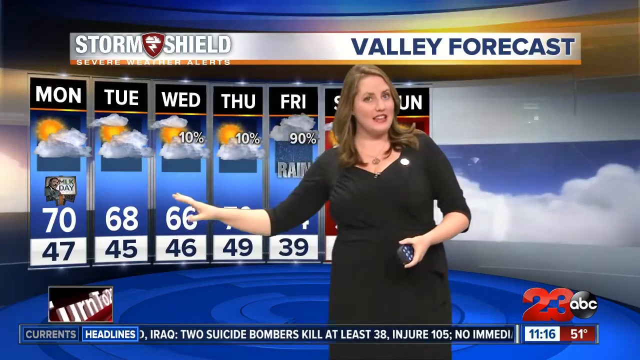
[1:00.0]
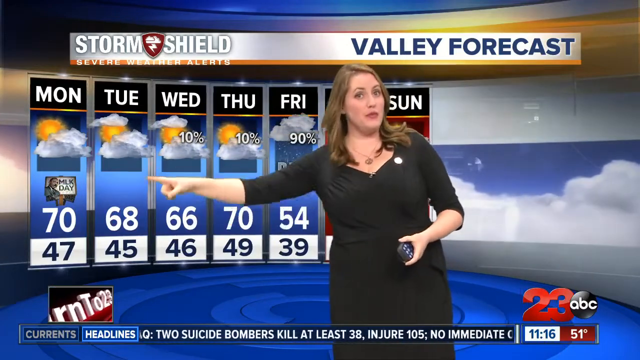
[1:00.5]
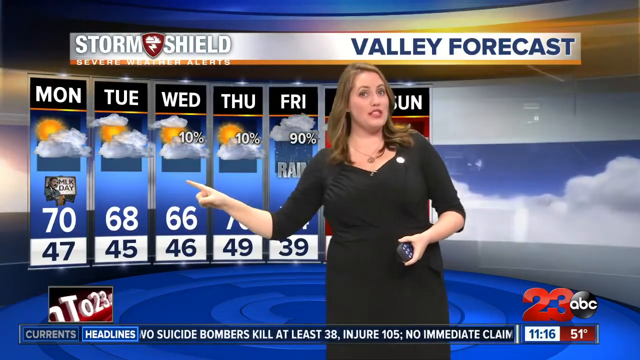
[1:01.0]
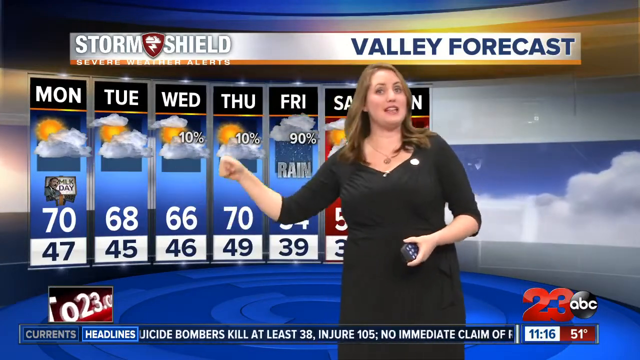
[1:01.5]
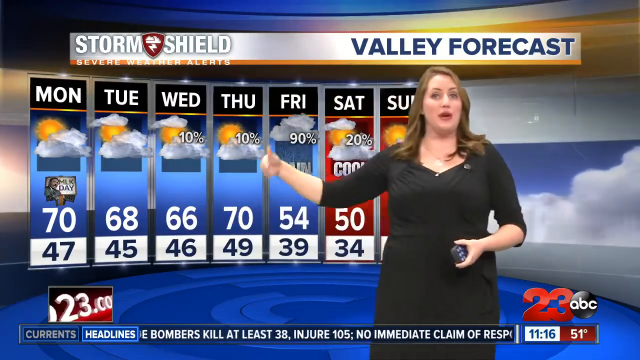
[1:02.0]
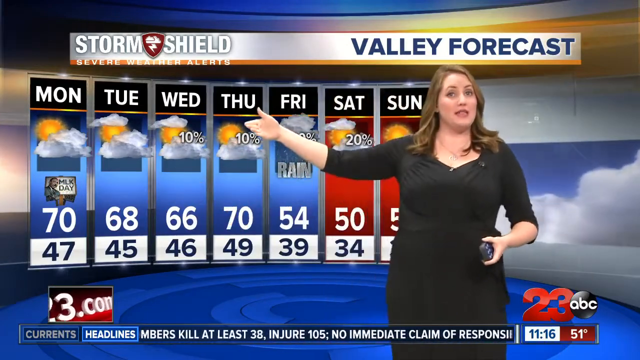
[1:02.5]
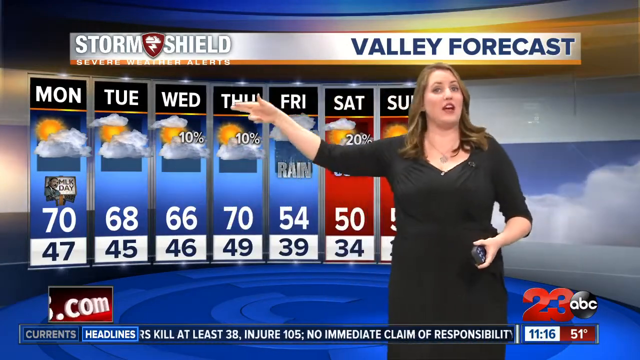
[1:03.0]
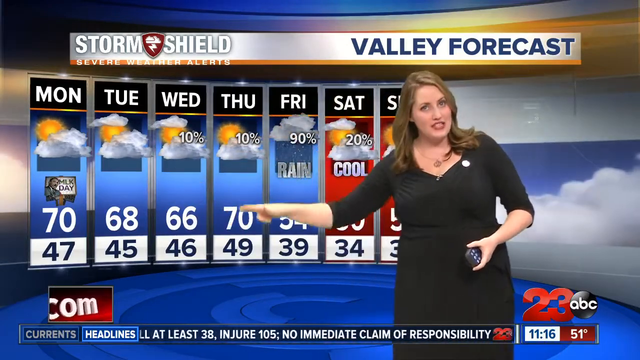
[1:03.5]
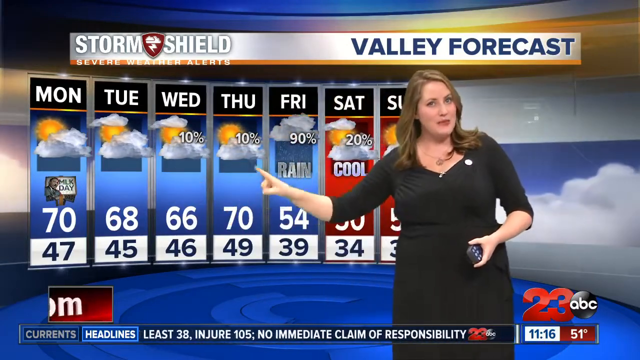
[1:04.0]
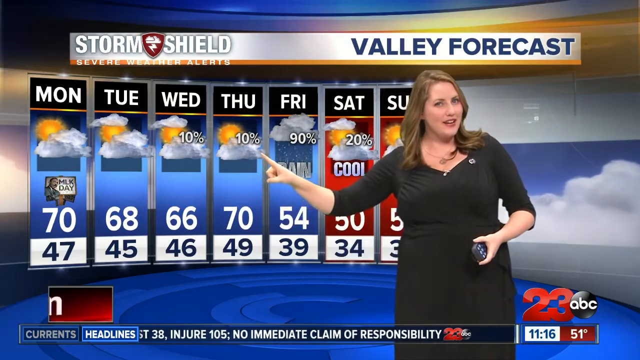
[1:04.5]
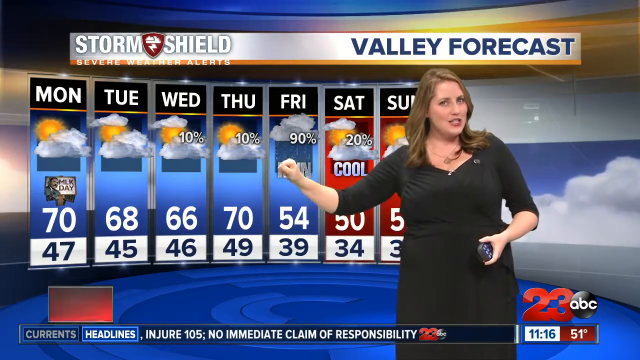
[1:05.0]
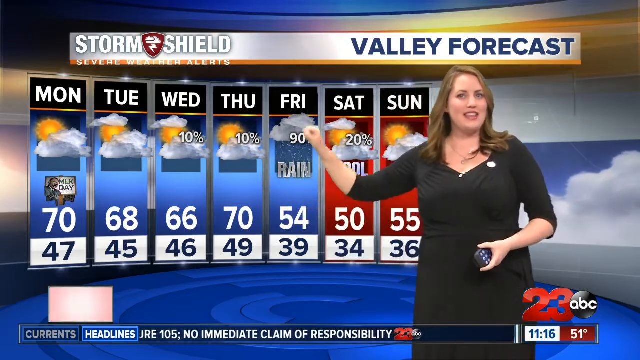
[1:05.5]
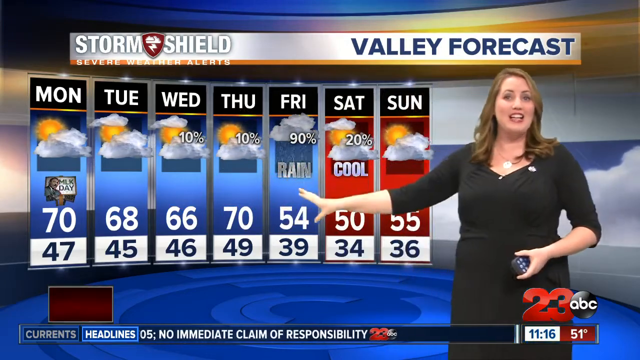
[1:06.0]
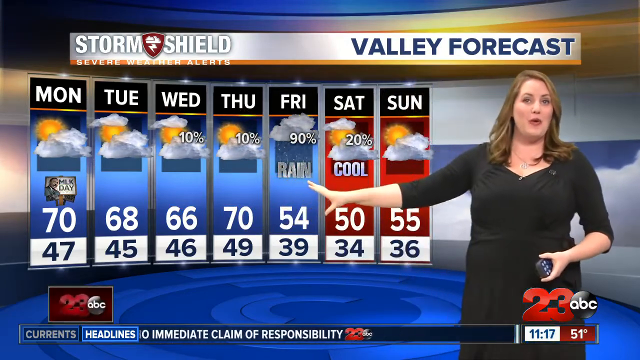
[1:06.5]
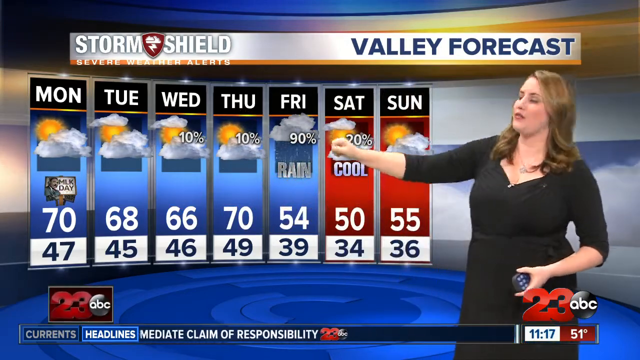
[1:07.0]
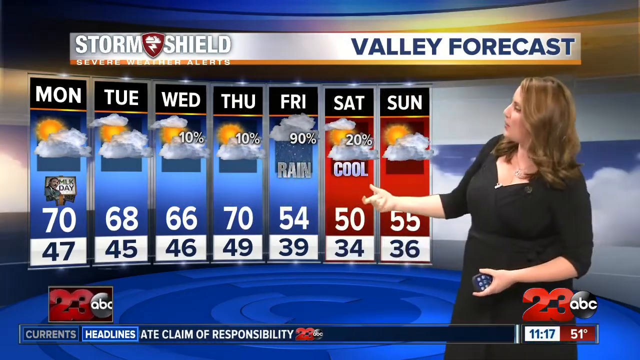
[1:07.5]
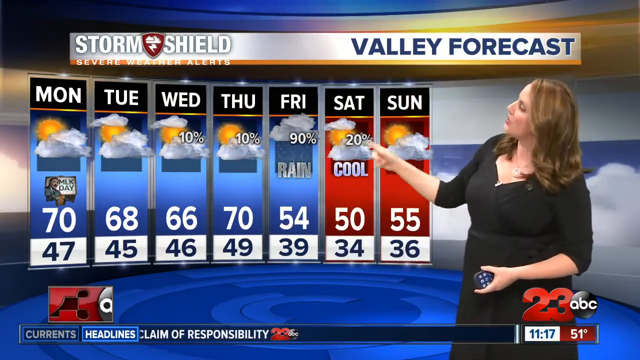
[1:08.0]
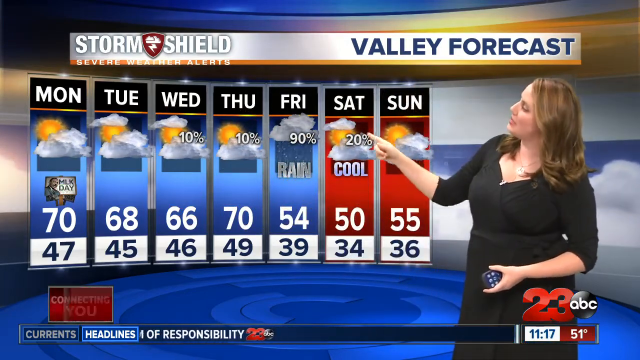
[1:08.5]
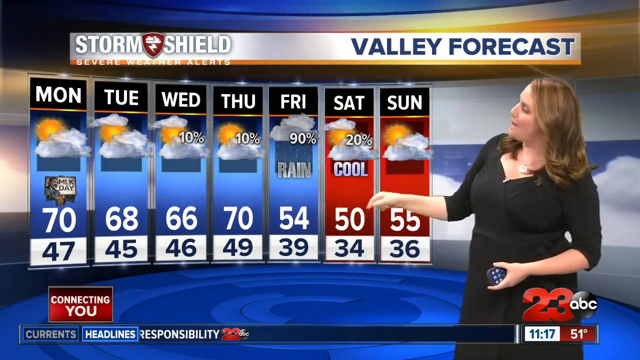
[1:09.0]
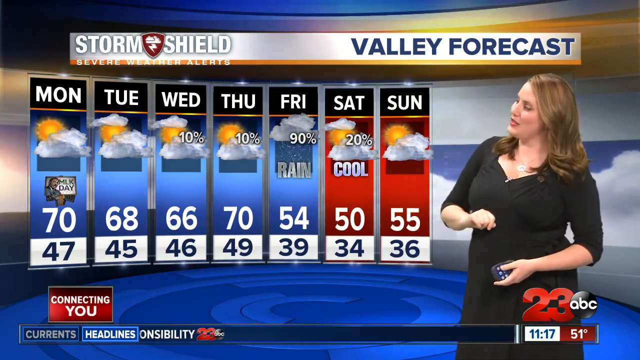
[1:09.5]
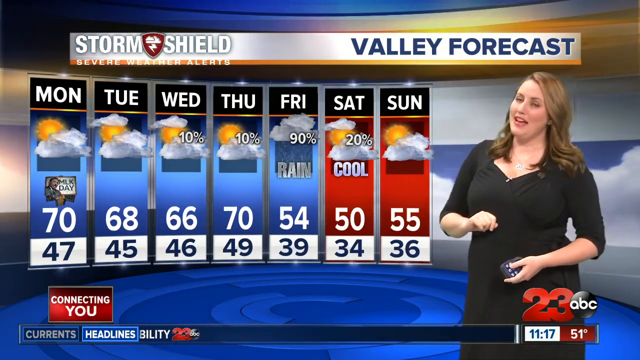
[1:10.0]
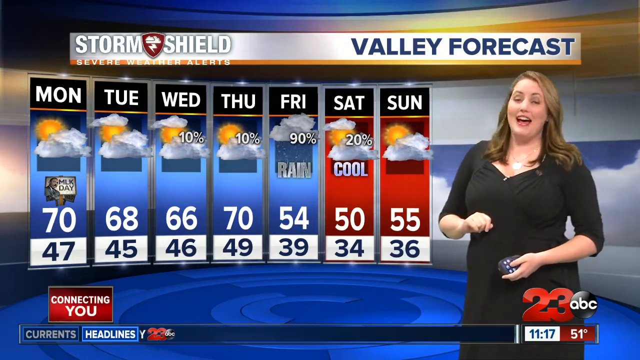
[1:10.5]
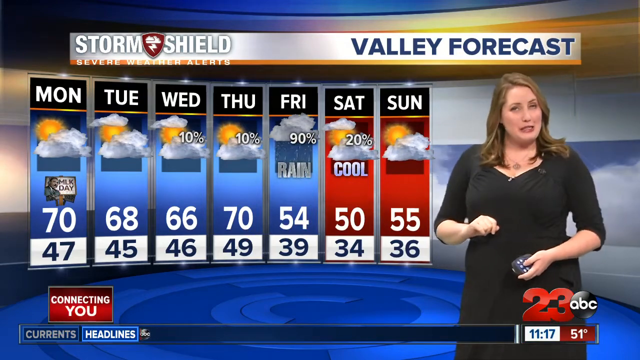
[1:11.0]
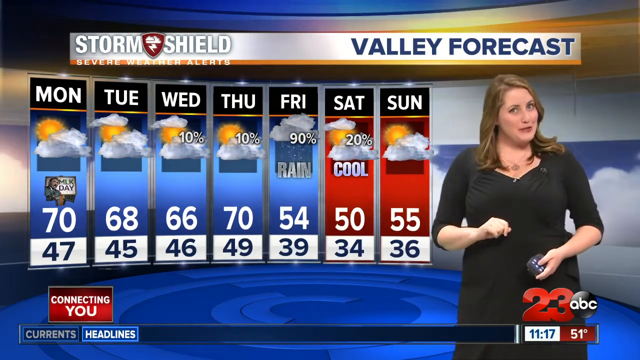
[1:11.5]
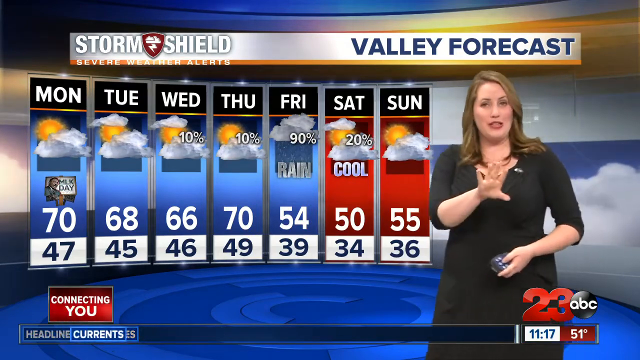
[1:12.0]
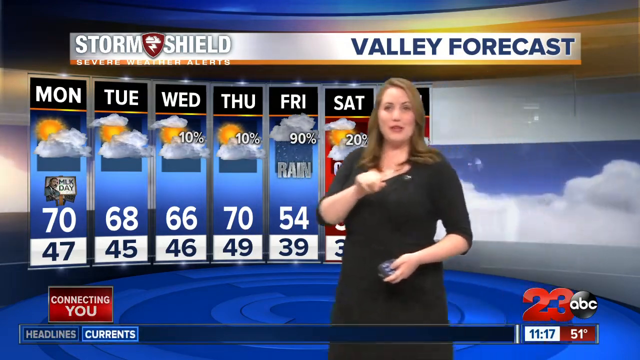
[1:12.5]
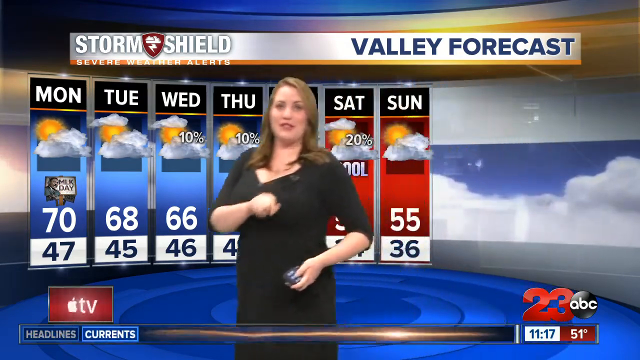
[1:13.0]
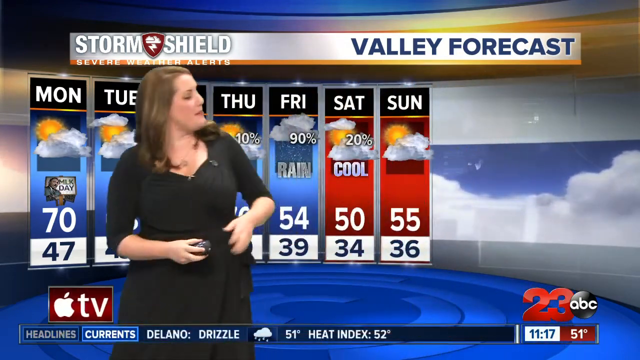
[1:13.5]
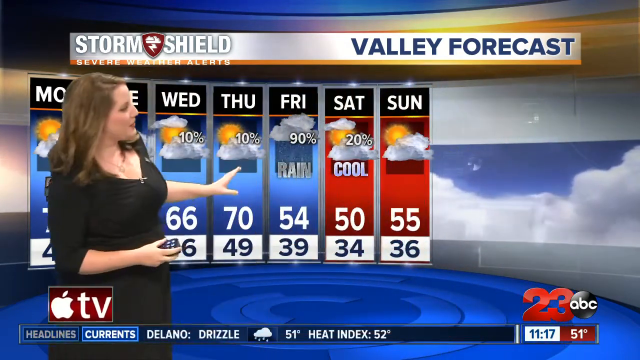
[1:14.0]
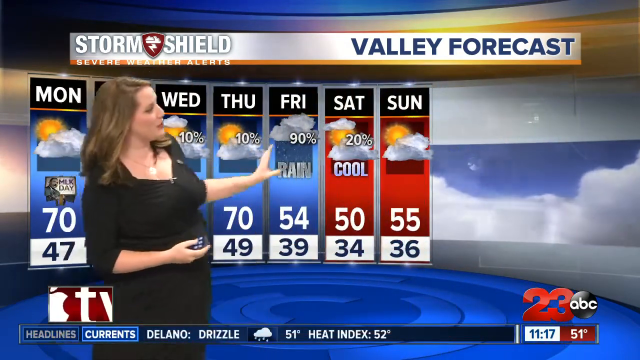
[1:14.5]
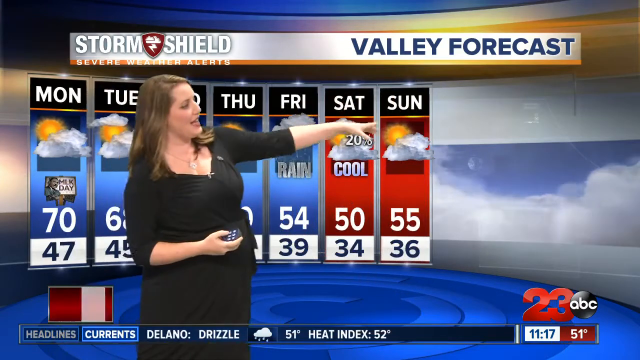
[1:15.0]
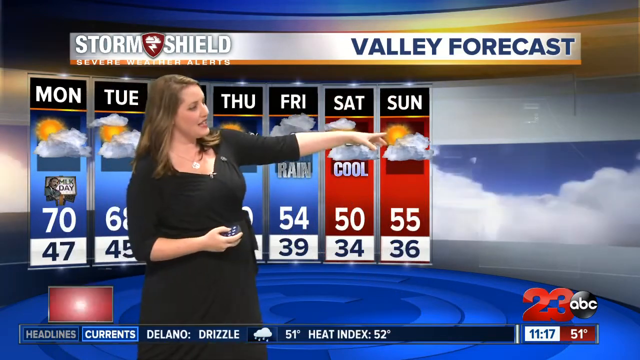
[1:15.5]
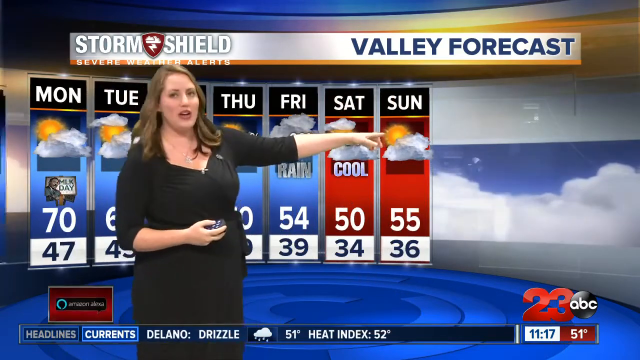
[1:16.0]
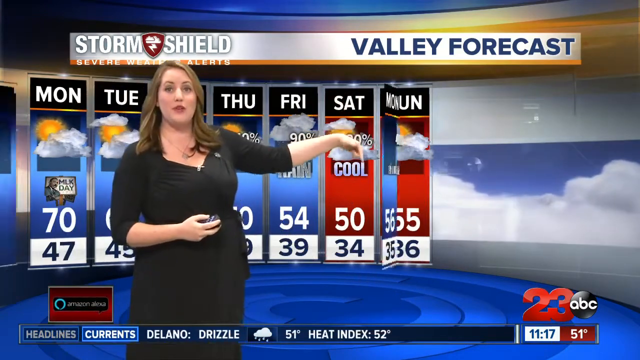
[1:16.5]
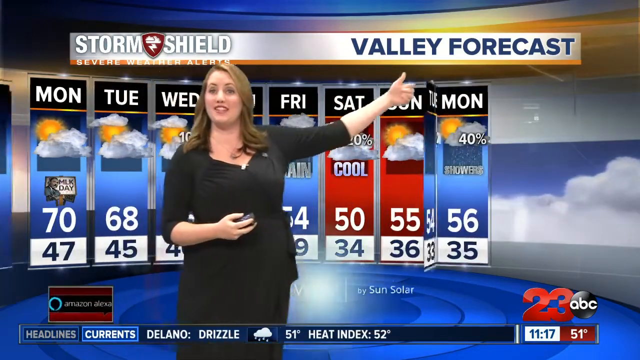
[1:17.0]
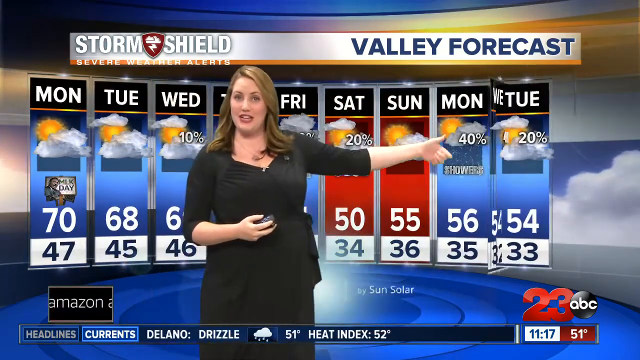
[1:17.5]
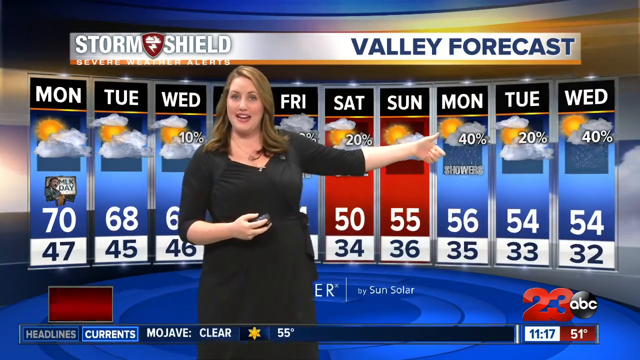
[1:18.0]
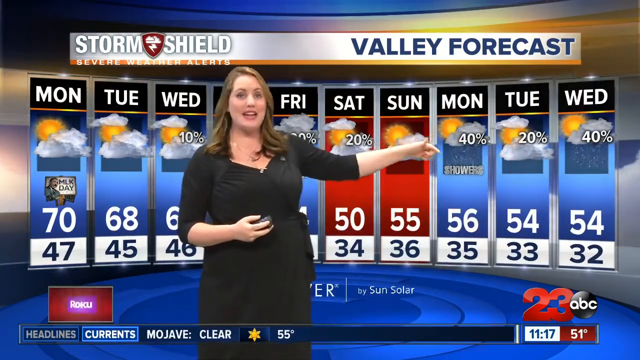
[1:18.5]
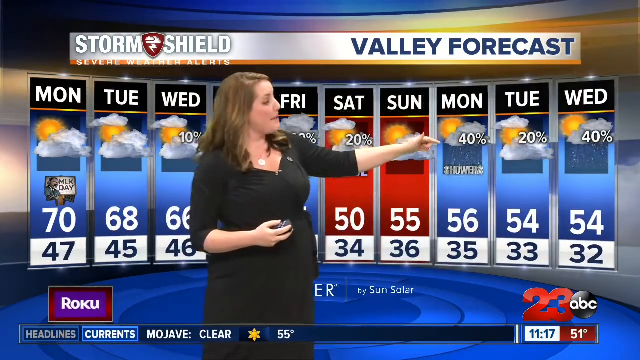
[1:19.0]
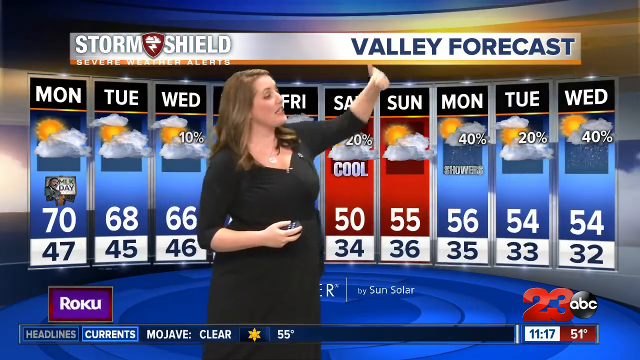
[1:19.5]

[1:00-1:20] The ABC News Channel 23 Storm Shield severe weather alert is now for the Inland Valley area. The valley forecast runs from Monday to Sunday, with blue columns for Monday through Friday and red ones for Saturday and Sunday. Highs reach as high as 70 and lows go as low as 34. The graphic with the bars is in front of what looks like clouds and sky. The meteorologist then extends the forecast by three days, adding days seven through ten, with temperatures as cold as 32. She looks mostly into the camera. In the small square in the bottom left-hand corner that earlier said "Roku," red-and-white text now reads "connecting you now."